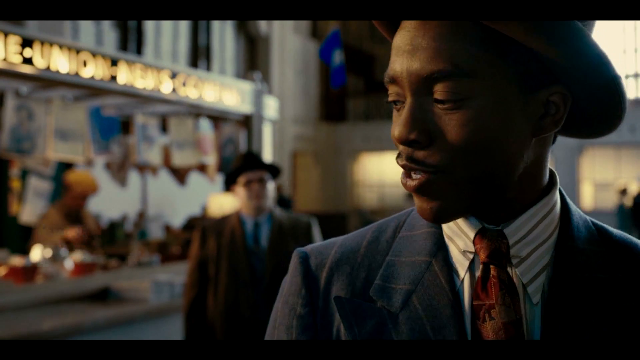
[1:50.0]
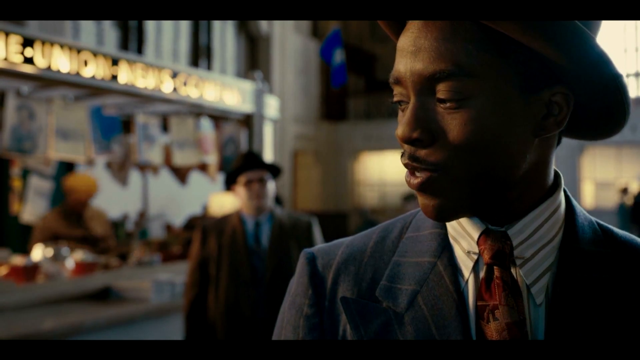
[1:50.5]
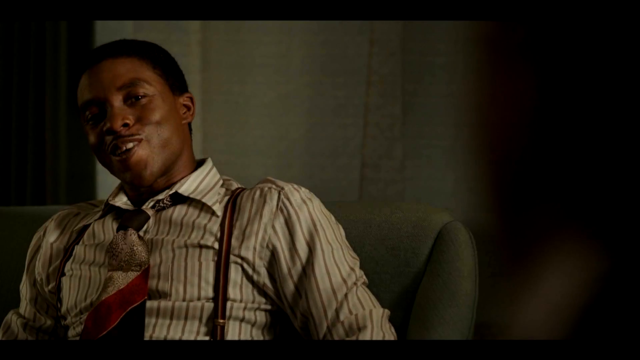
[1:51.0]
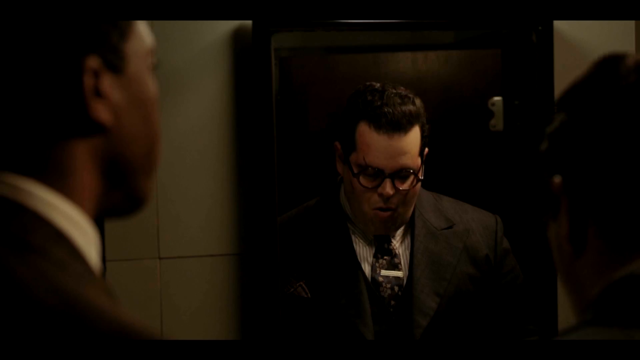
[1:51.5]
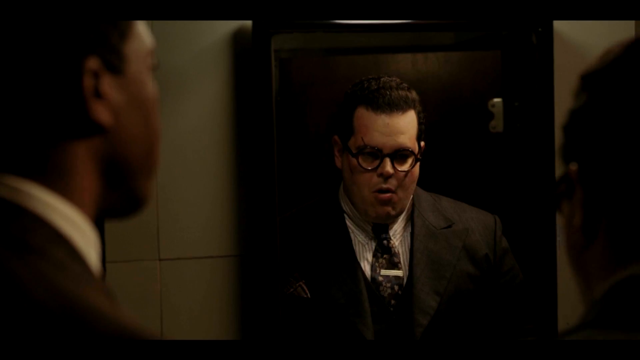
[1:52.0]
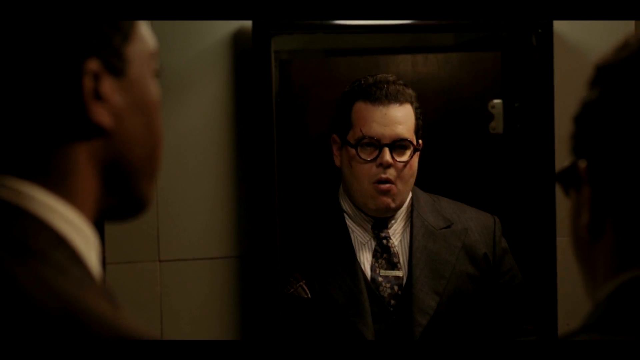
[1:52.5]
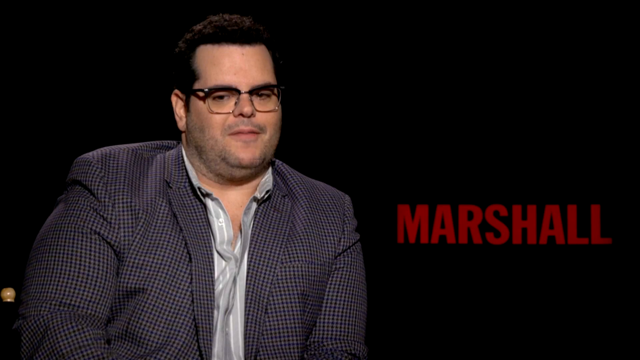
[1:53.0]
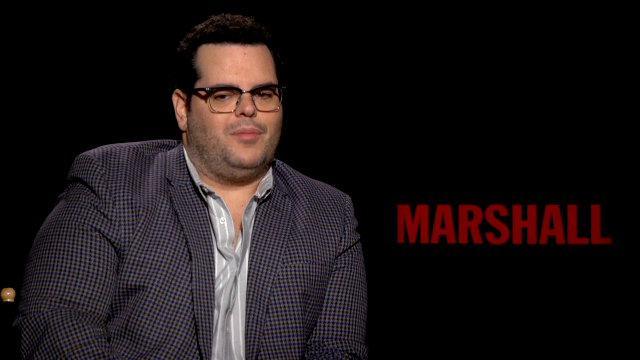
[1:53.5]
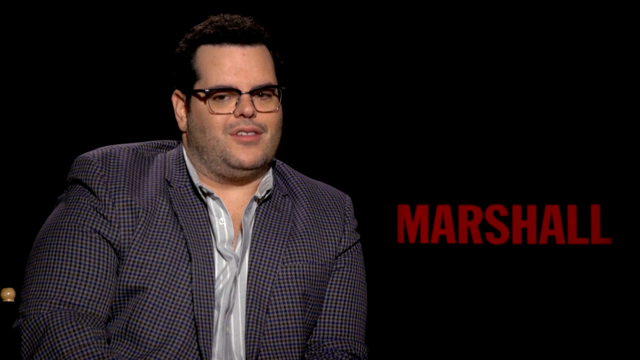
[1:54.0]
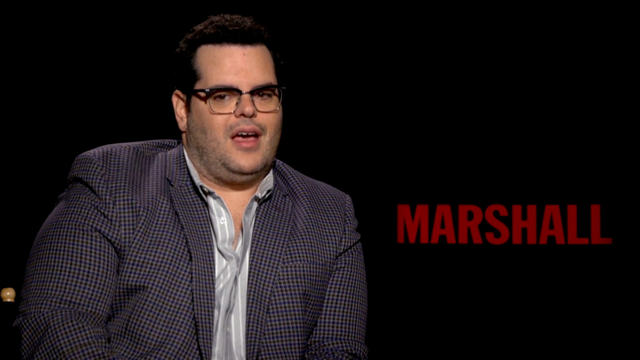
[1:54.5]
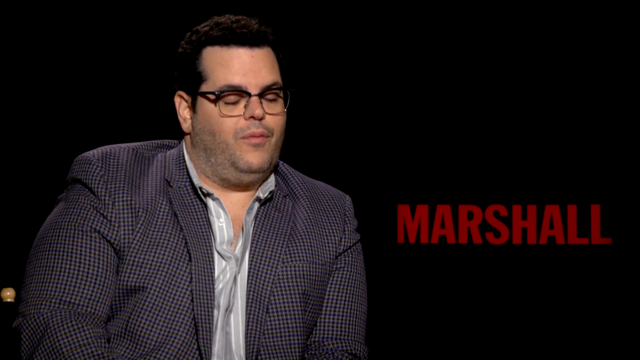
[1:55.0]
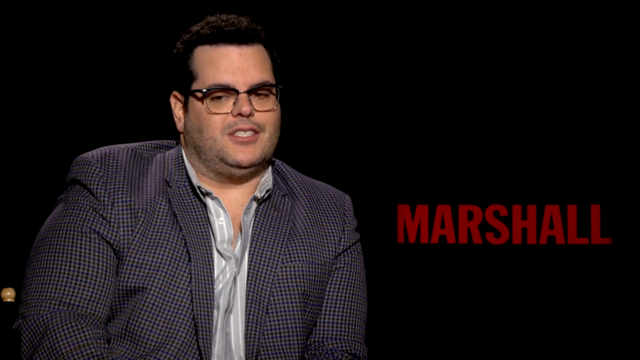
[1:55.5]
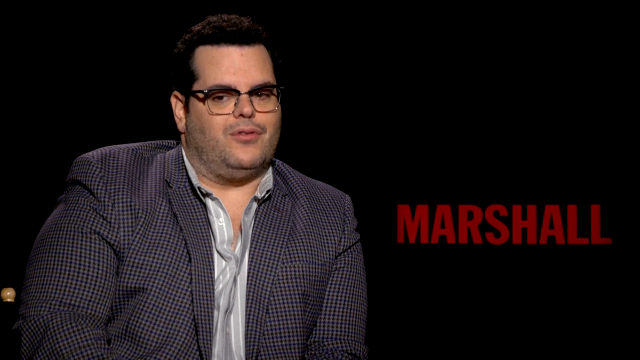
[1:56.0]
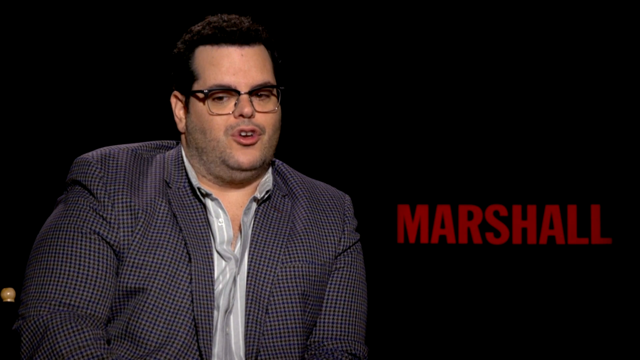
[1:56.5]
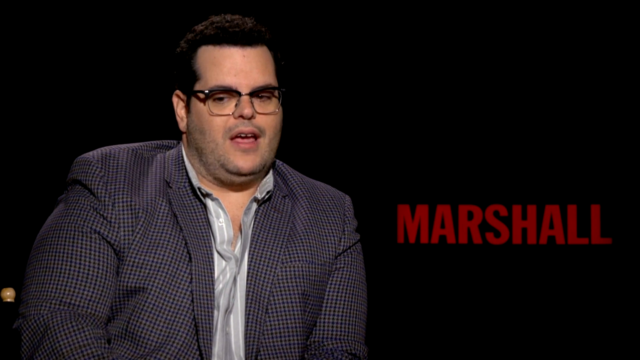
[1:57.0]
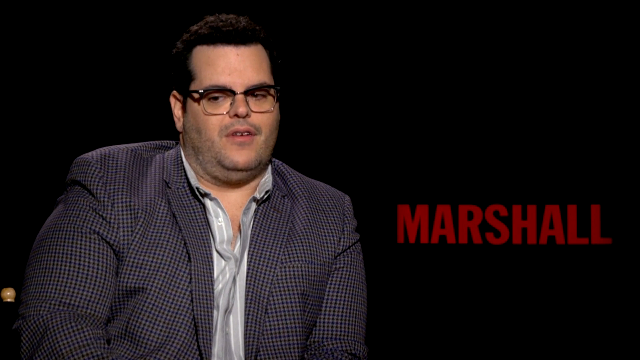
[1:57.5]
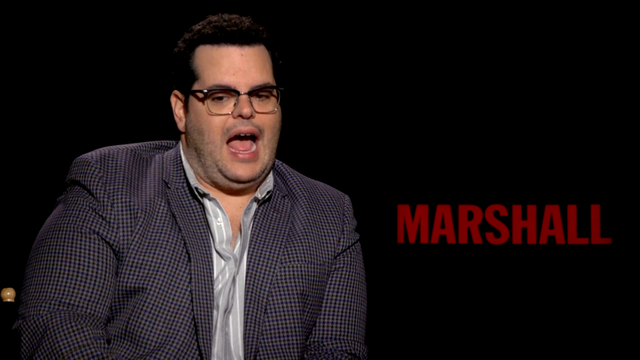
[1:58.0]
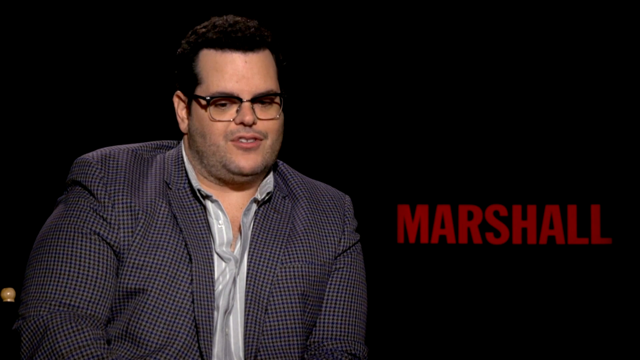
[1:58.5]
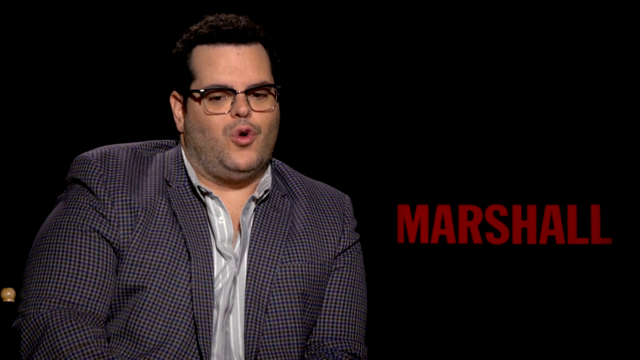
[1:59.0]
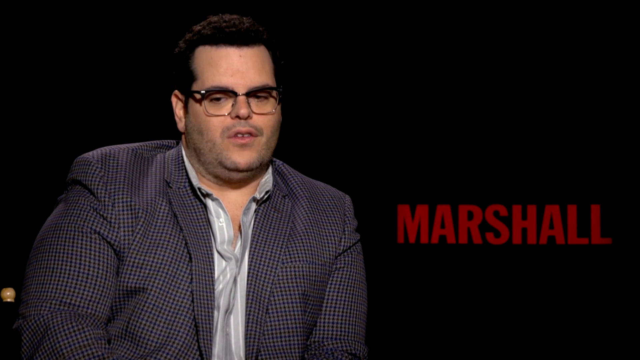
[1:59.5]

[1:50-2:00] The chubby-looking man is the main focus as he continues to talk. His glasses are very thin and roughly square-shaped, arching up in an uneven square near the nose bridge. He wears a black and grey striped vest over a white and grey striped undershirt, and he looks very happy.